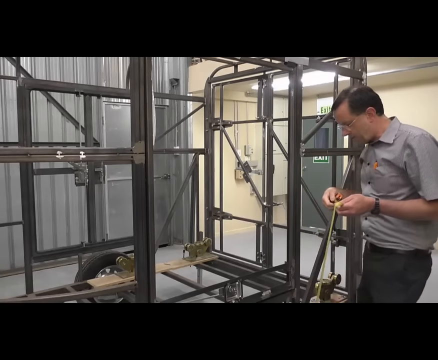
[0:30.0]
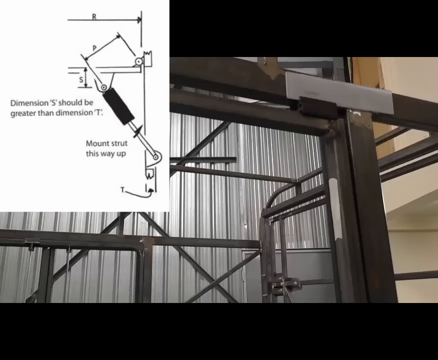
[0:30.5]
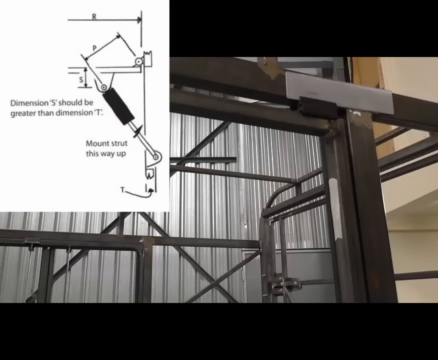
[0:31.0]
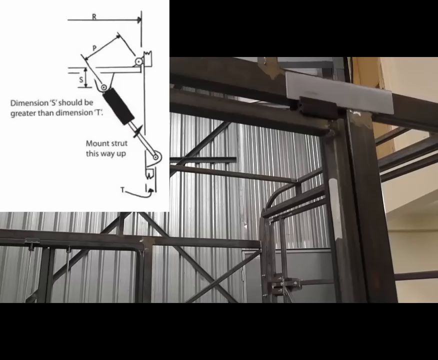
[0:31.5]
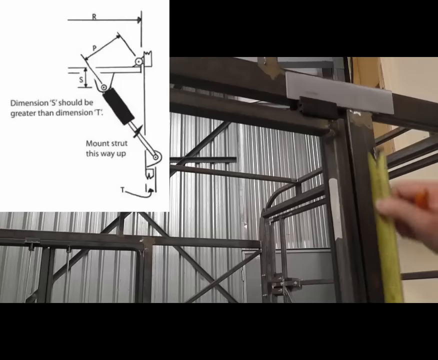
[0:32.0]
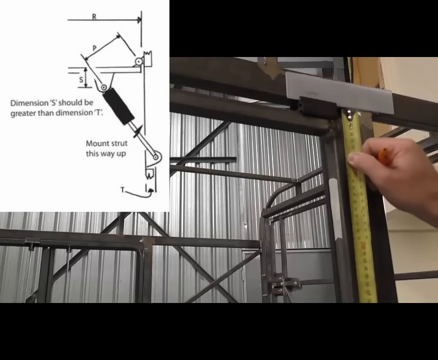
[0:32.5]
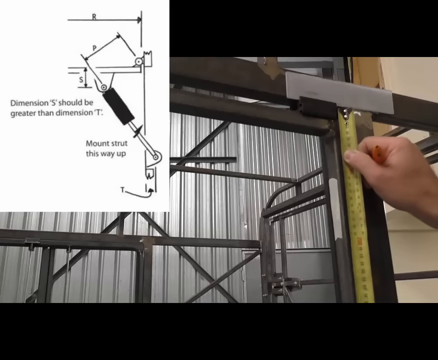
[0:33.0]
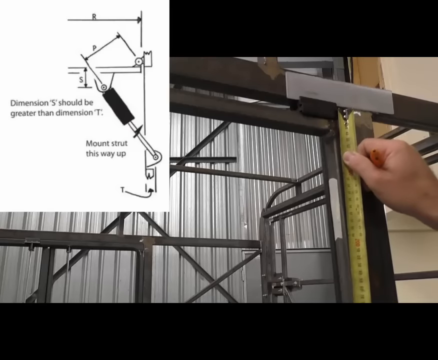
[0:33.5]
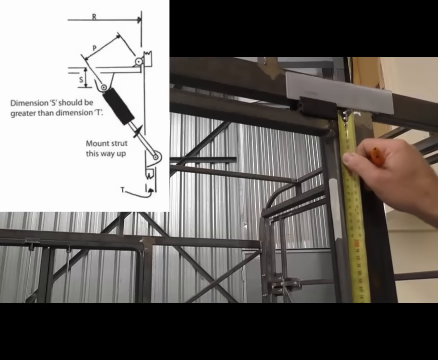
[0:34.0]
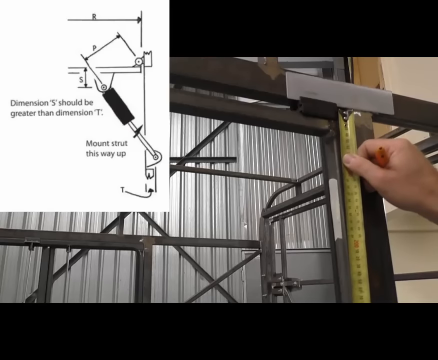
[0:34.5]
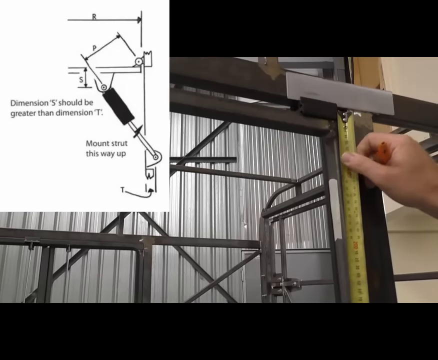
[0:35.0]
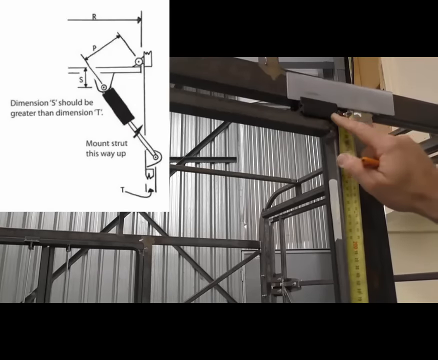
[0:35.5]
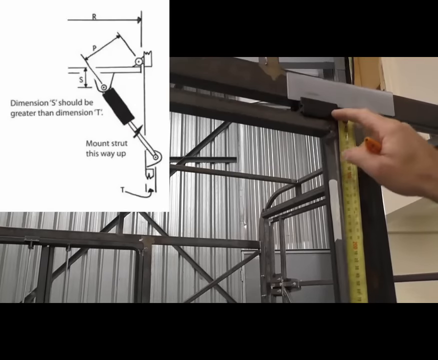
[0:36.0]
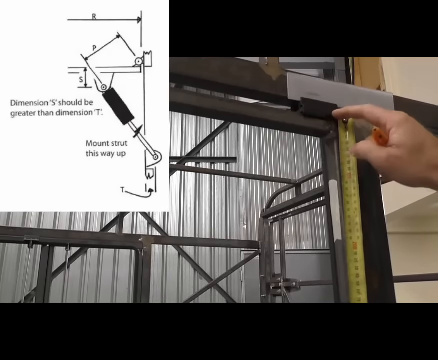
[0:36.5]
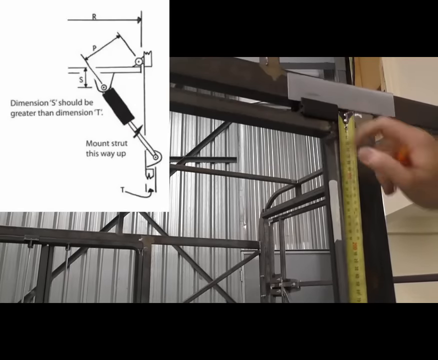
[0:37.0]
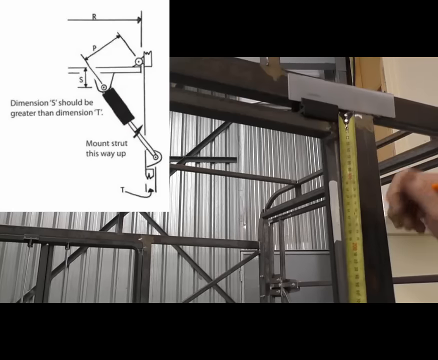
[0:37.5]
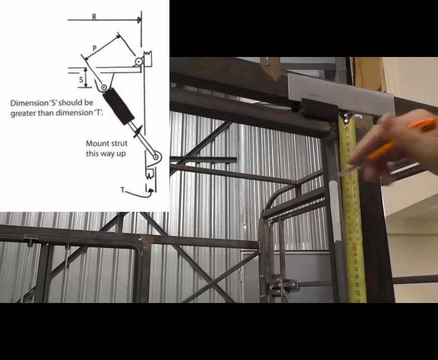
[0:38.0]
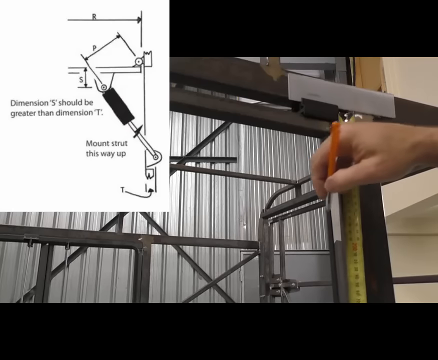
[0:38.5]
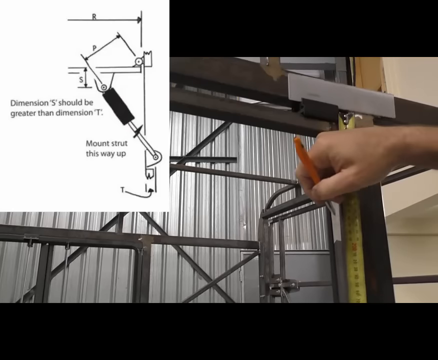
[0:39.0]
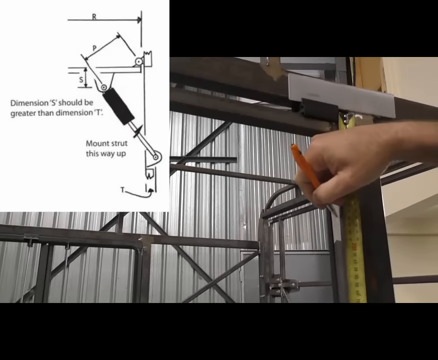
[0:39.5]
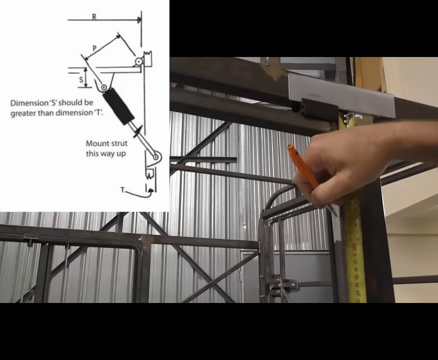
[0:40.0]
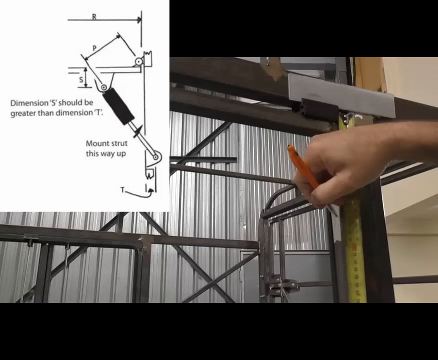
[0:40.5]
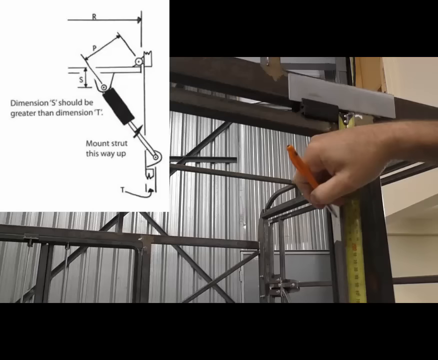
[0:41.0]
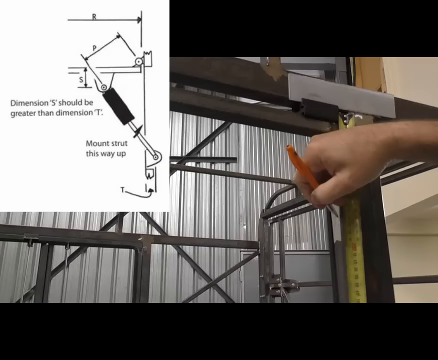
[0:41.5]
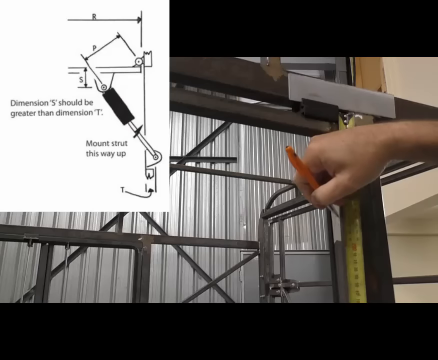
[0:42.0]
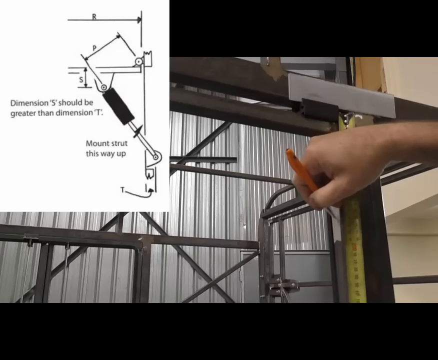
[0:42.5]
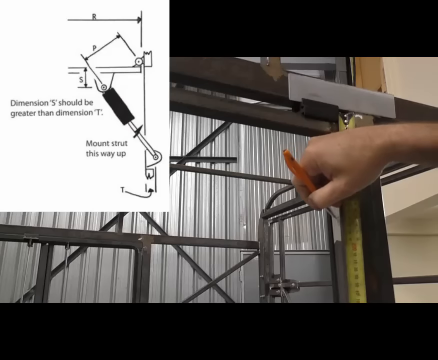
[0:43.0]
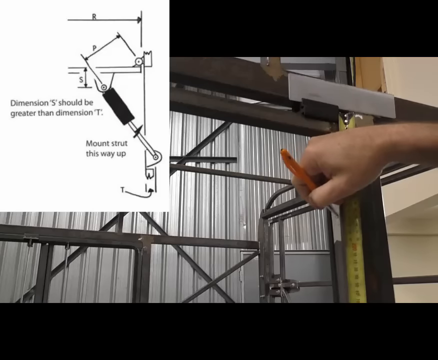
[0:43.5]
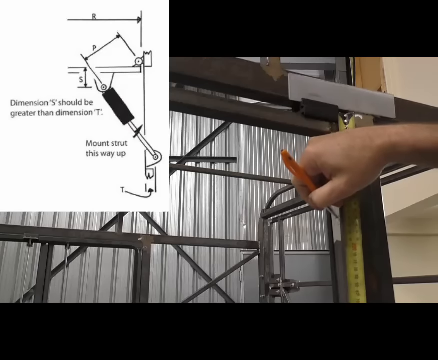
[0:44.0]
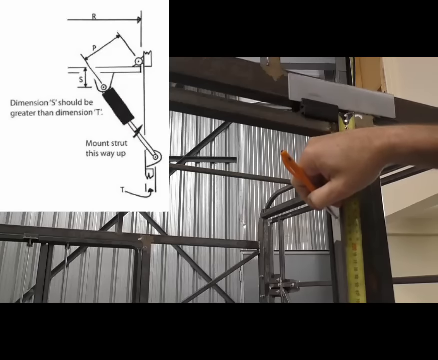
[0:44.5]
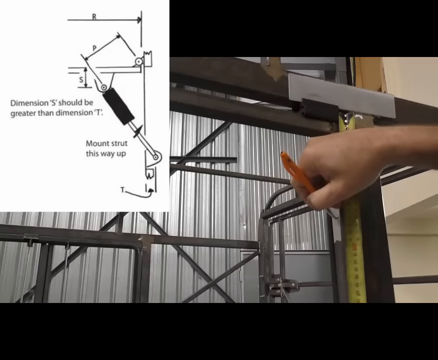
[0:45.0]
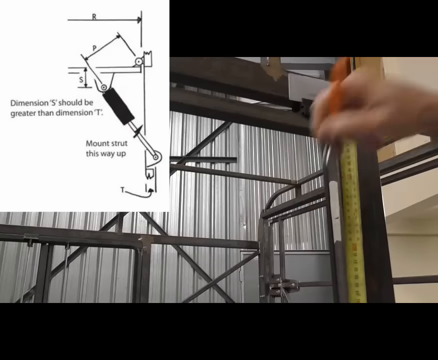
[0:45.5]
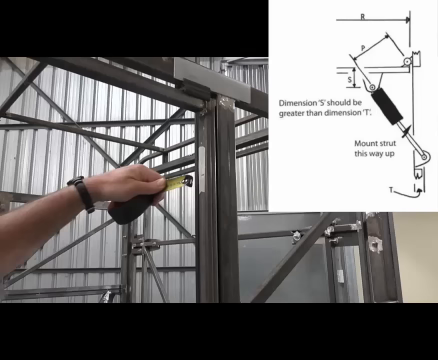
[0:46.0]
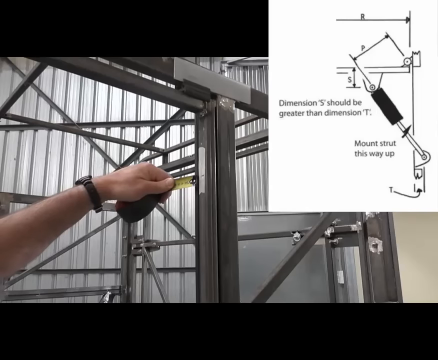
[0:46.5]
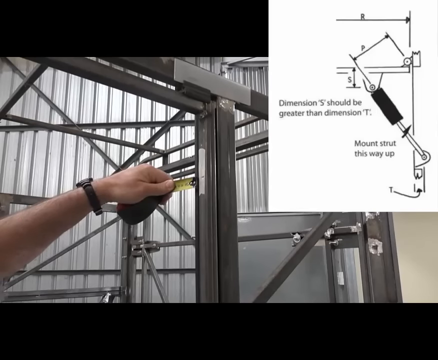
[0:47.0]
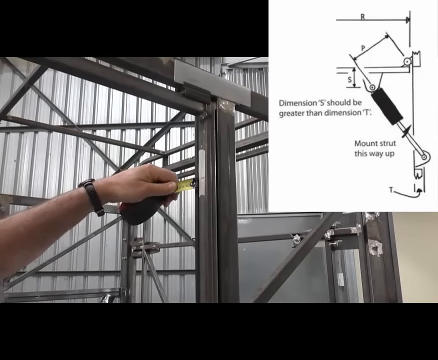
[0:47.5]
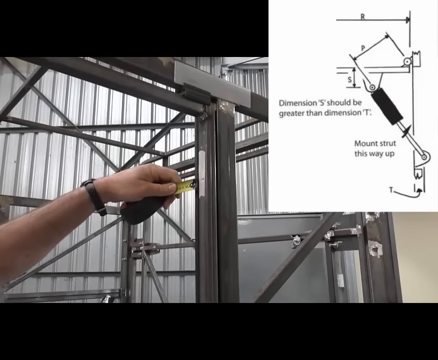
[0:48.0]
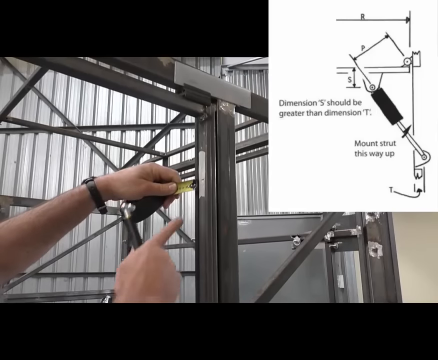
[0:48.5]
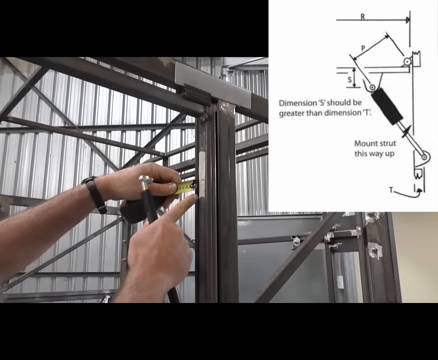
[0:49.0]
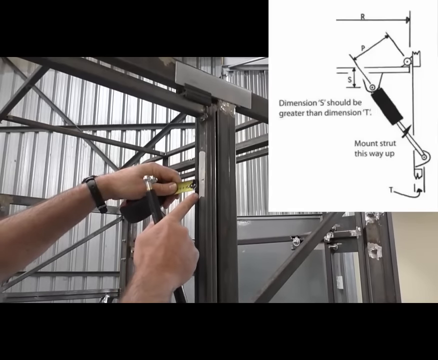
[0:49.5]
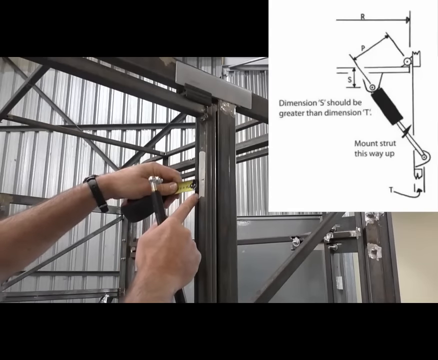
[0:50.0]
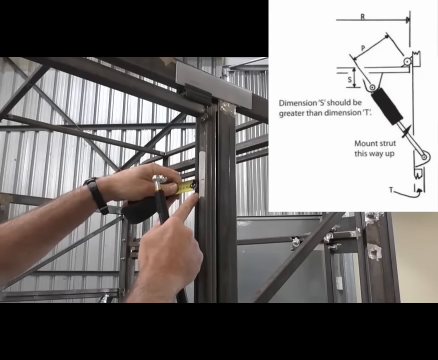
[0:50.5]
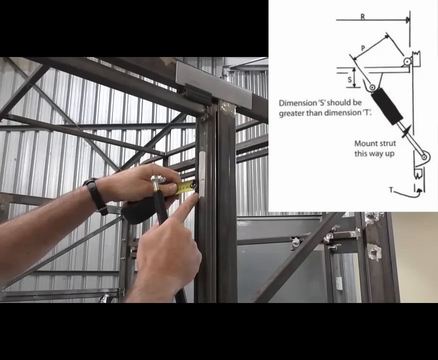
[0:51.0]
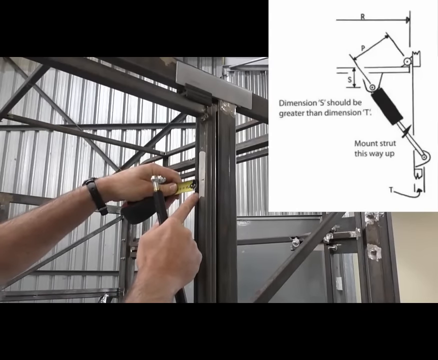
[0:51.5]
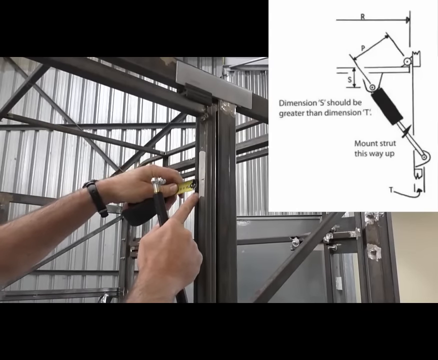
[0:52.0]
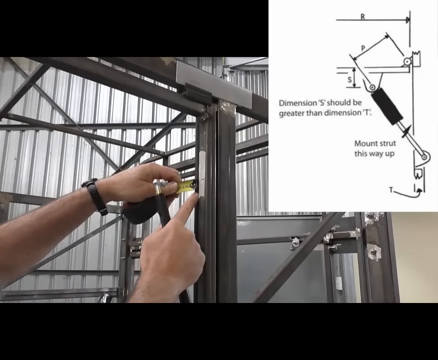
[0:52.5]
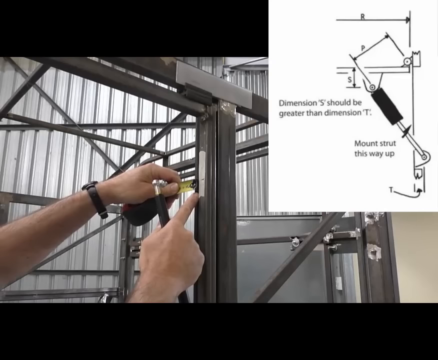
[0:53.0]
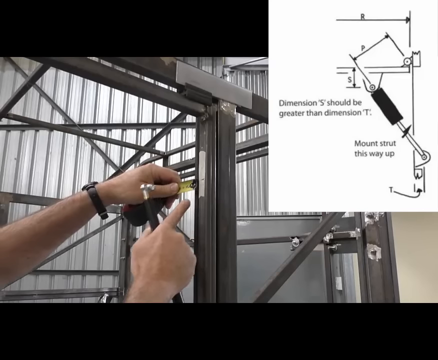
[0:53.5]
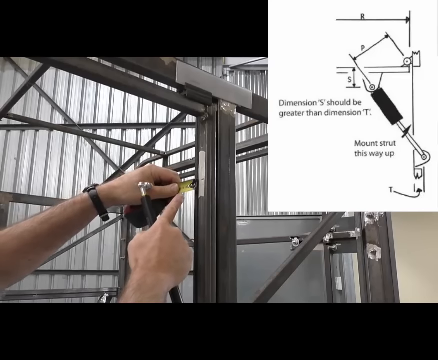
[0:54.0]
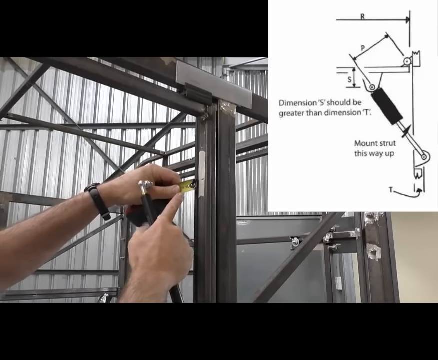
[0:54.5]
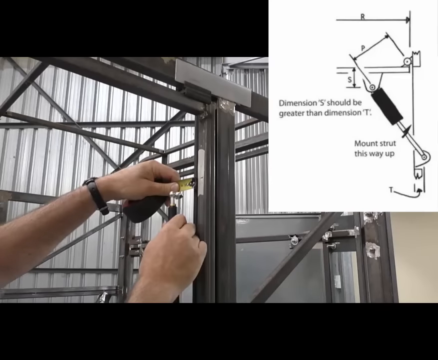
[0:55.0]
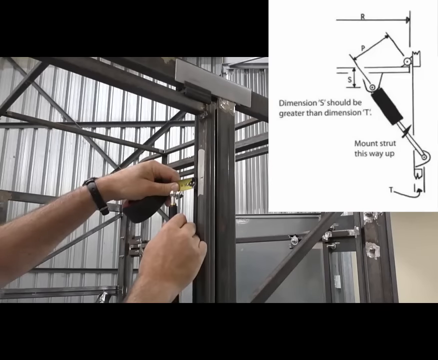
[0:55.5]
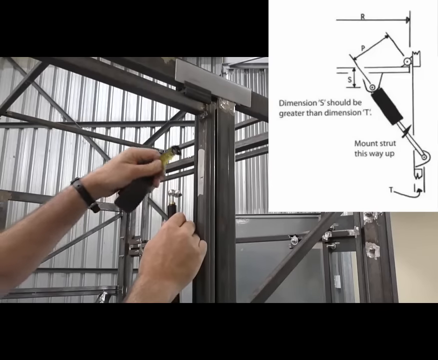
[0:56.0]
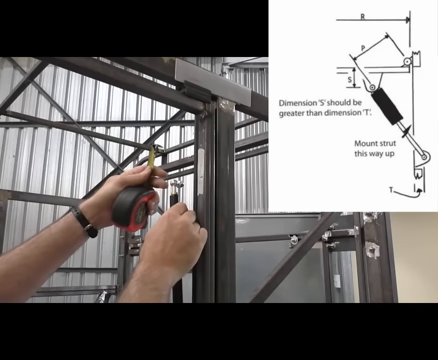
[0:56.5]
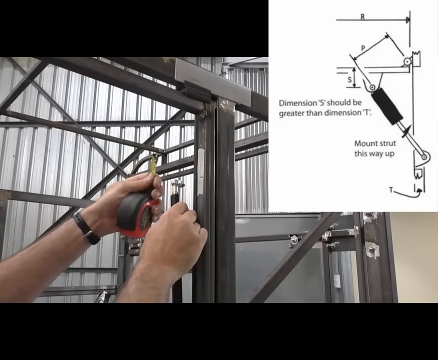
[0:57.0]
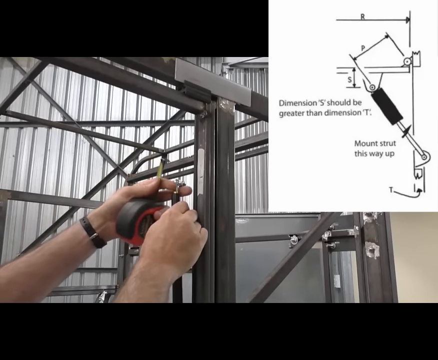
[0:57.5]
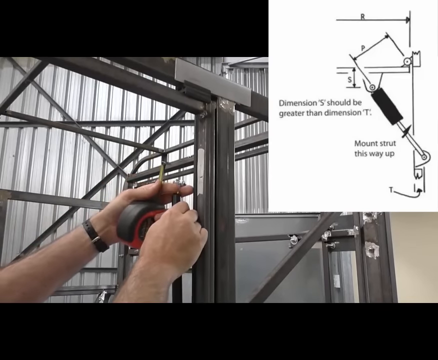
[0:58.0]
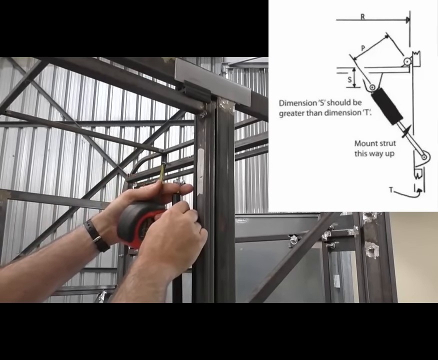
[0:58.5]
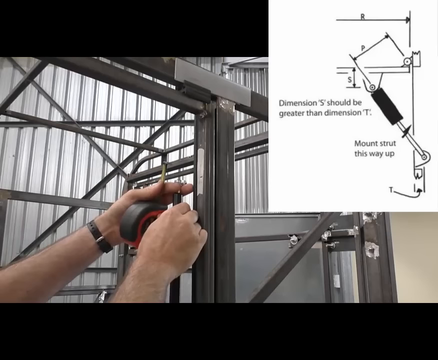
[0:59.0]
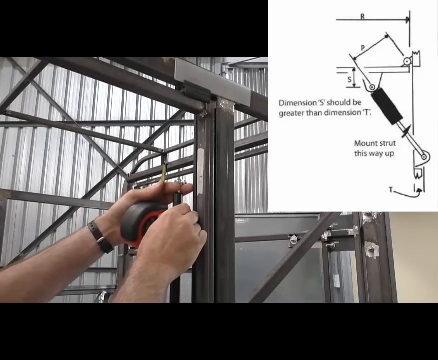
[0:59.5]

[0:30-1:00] A man in some type of uniform shows a measuring tape, while the left side of the frame shows some type of strut. He uses an orange tool to mark or scratch the metal frame where he needs to work, then measures from a different angle. In his right hand he holds something that looks like a tire pressure gauge. He wears glasses, and he points at several things.